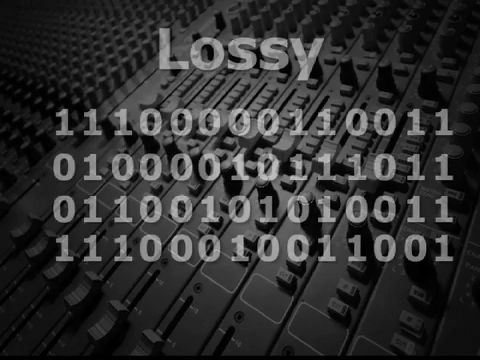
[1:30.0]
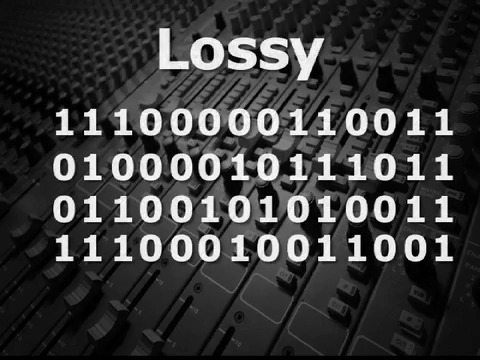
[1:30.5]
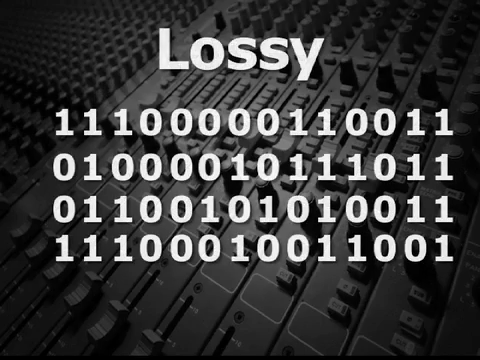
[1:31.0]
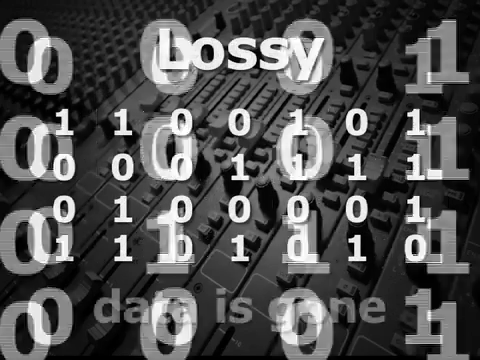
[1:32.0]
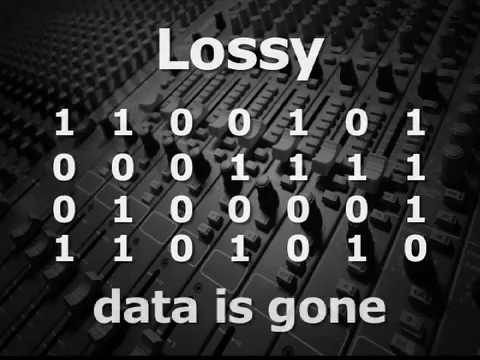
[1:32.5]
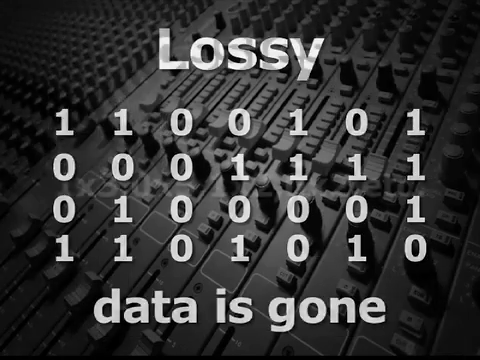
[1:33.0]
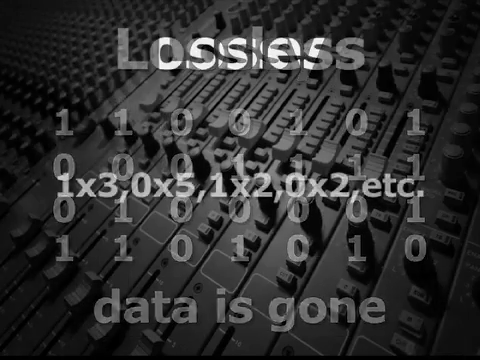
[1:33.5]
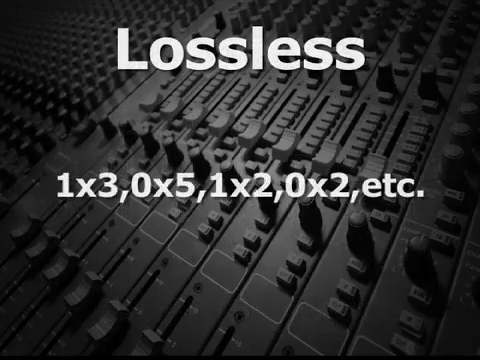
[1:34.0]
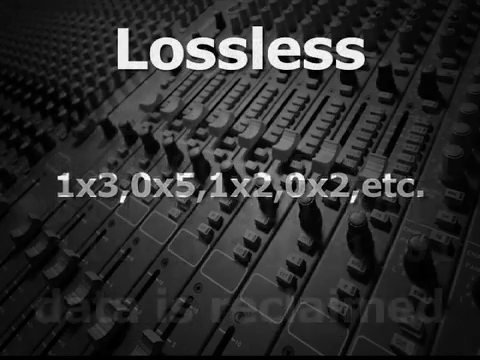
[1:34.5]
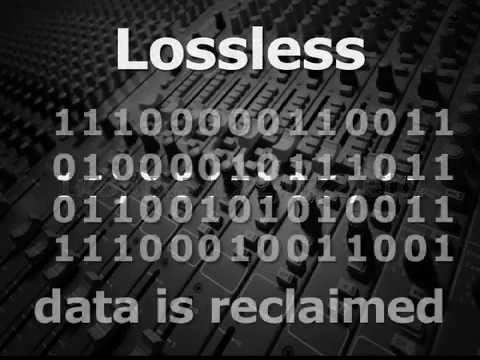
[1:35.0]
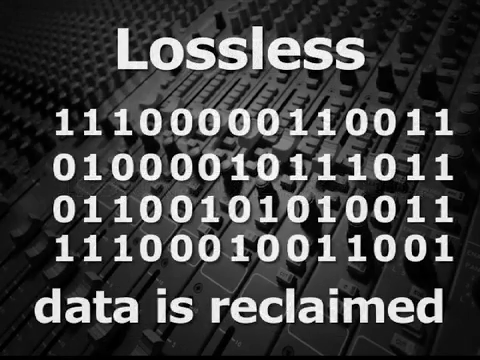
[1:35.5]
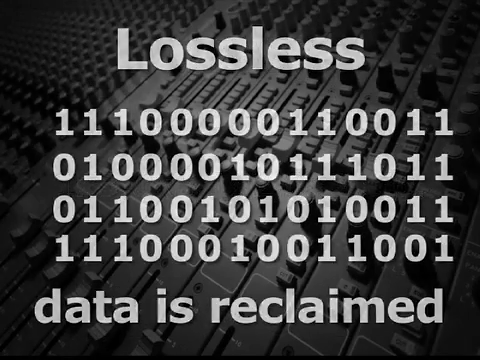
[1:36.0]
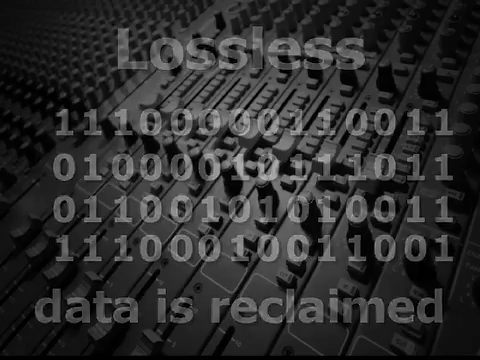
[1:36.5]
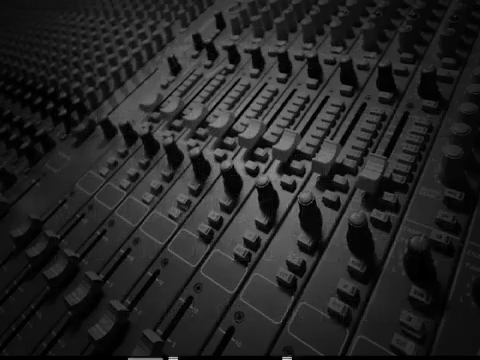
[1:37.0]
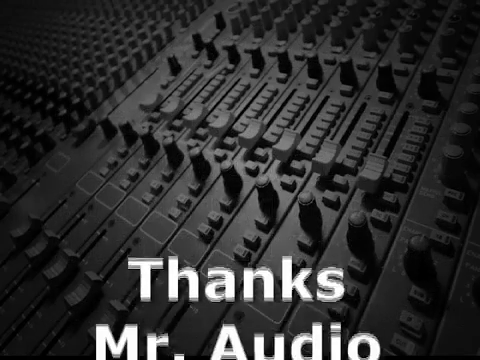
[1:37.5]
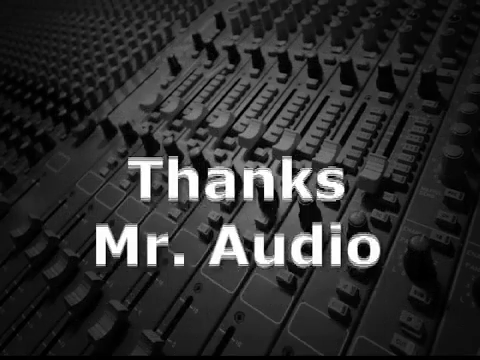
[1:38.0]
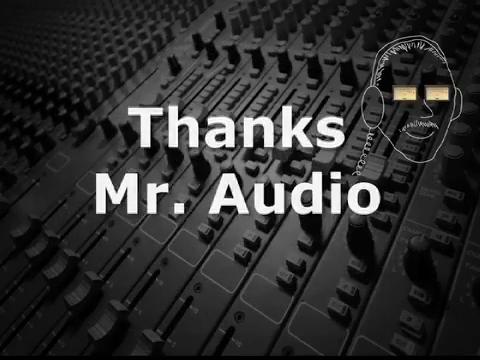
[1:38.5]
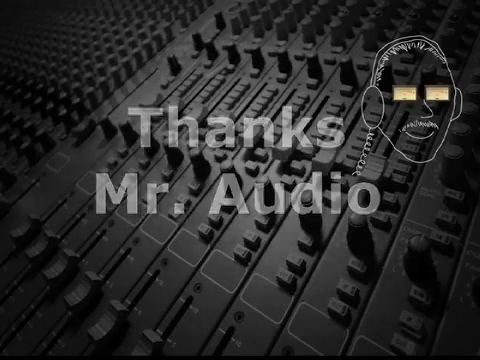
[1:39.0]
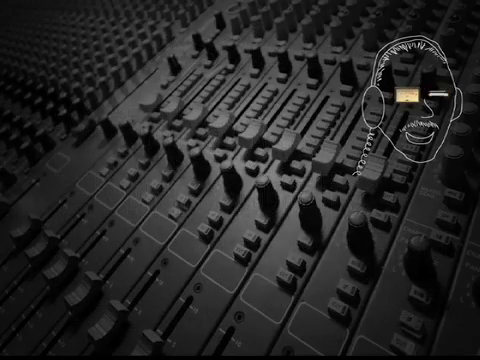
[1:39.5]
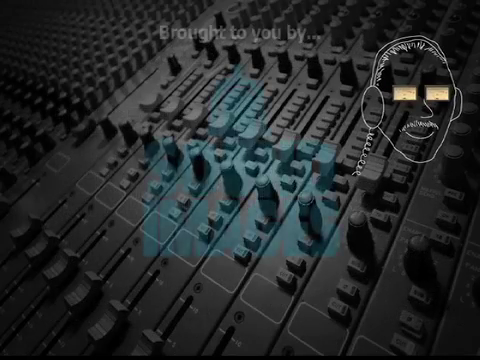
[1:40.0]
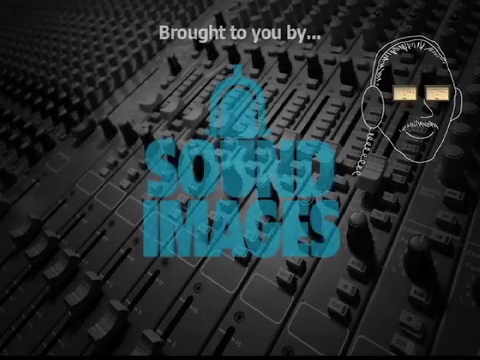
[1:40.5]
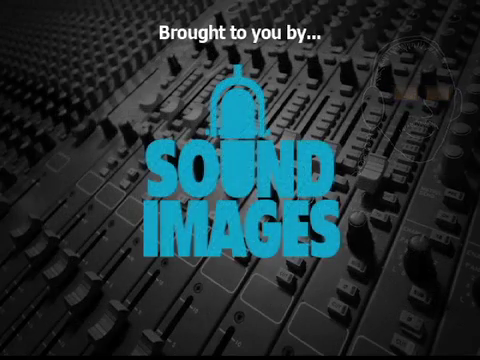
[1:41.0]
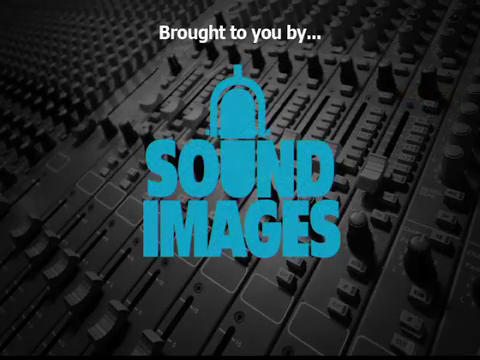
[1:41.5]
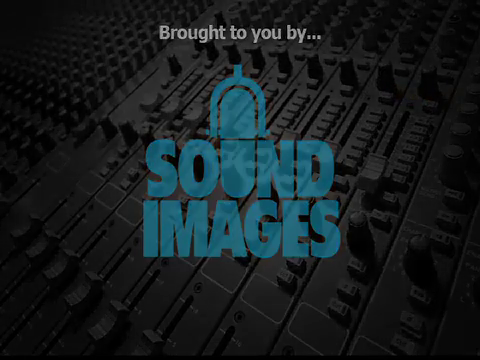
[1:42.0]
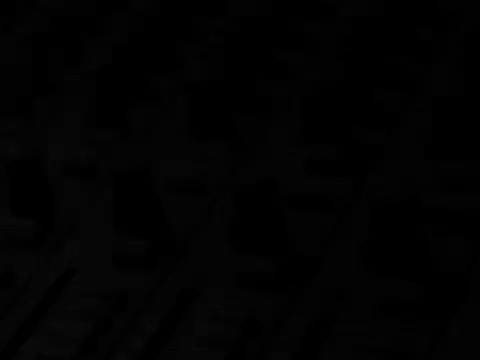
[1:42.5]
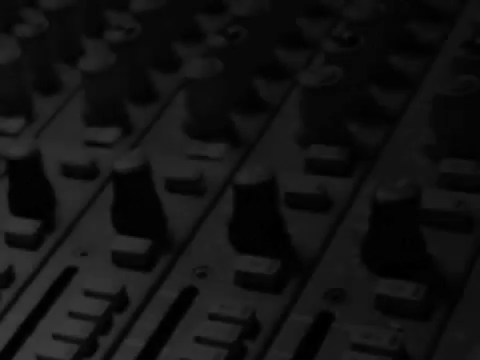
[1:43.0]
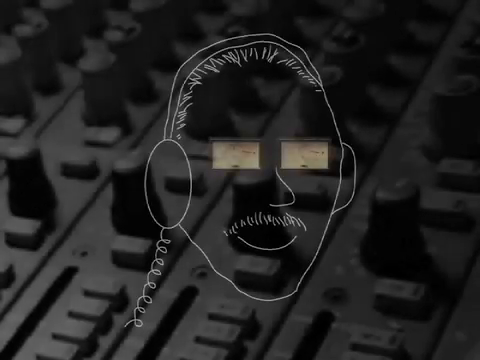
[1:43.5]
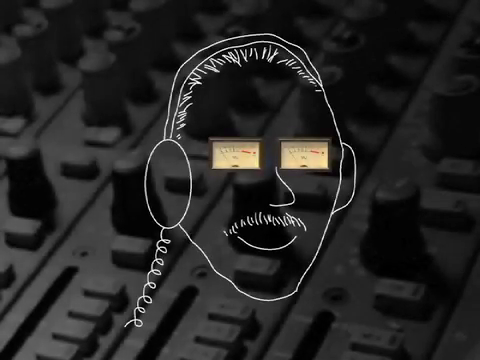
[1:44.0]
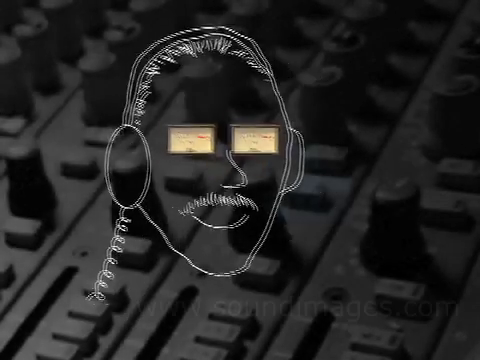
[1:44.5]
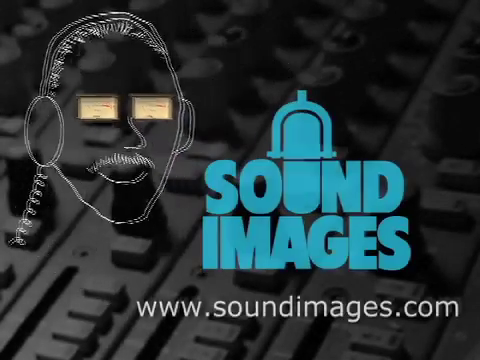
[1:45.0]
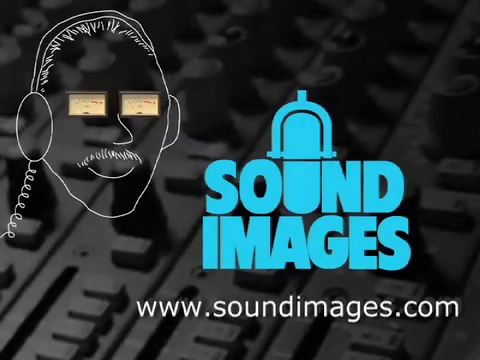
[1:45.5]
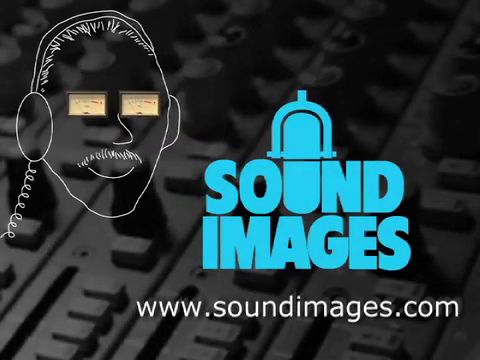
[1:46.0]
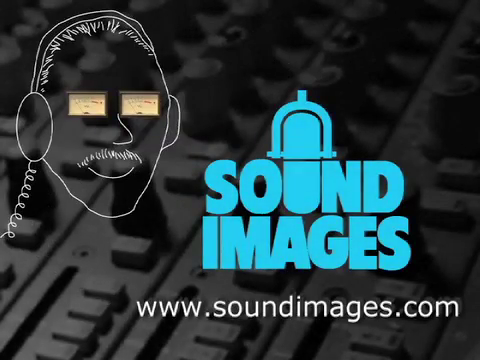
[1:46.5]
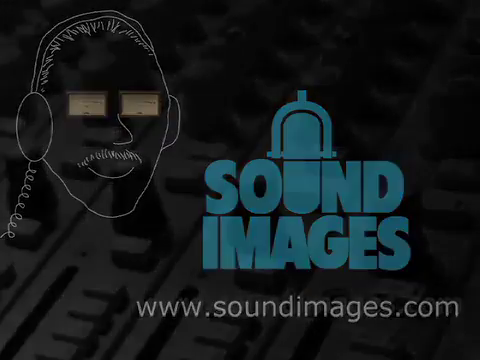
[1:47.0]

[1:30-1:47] The background is a still picture of an equalizer that looks to have a filter on it, as it appears all black. Wording in the center in white font reads "lossy", with four lines of white binary code underneath. Some of the binary code pops up and comes closer to the camera. Wording underneath the binary code then says "data is gone". The wording disappears and "lossless" appears at the top, with the equations "1 x 3, 0 x 5, 1 x 2, 0 x 2" underneath, followed by "etc." The binary code is then shown in the center of the image, and underneath it the text says "data is reclaimed".